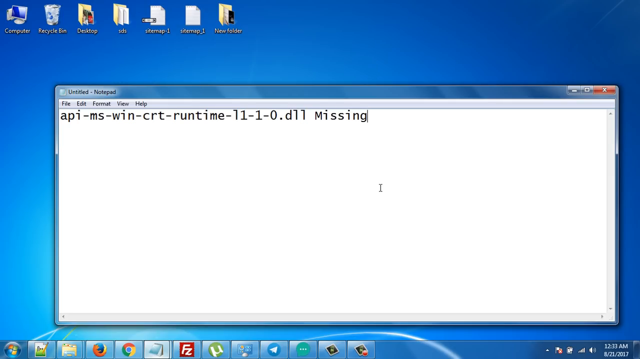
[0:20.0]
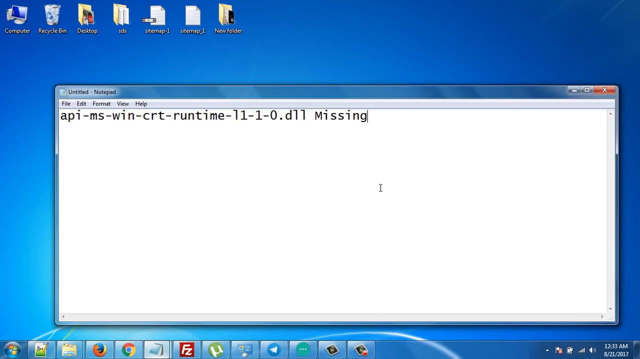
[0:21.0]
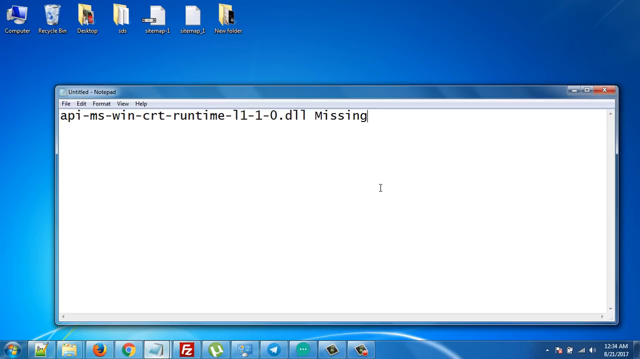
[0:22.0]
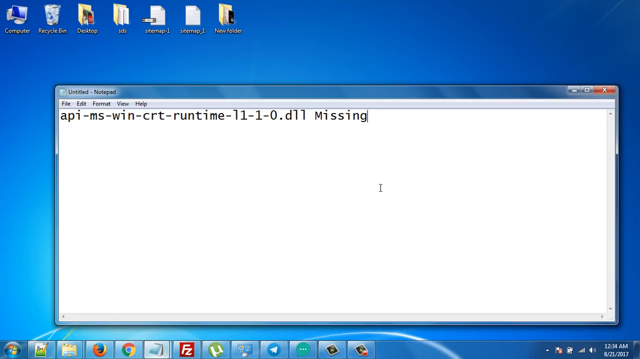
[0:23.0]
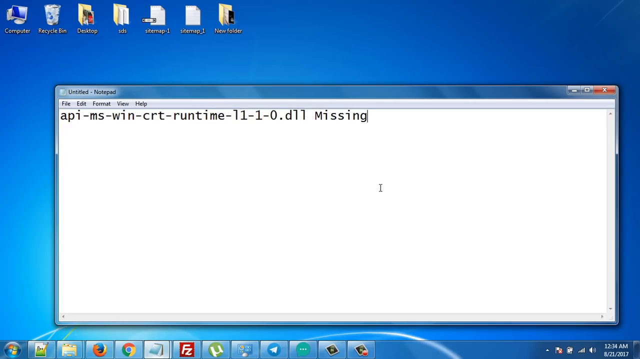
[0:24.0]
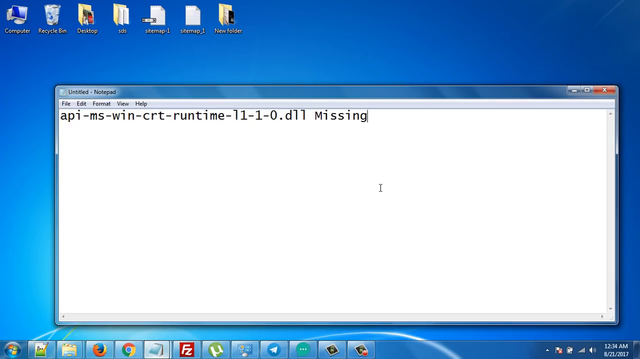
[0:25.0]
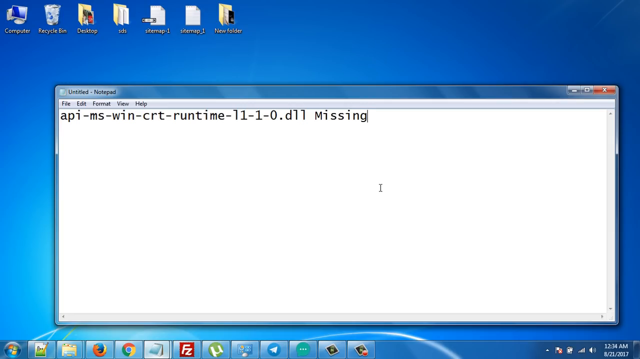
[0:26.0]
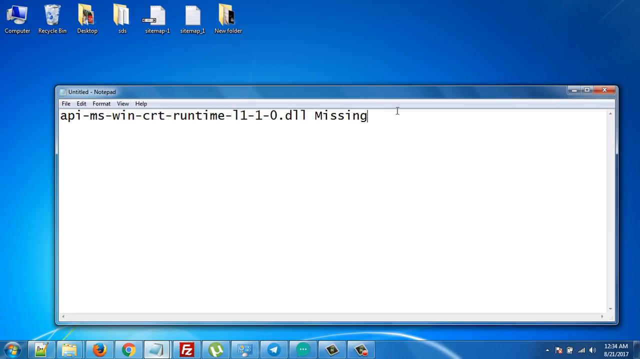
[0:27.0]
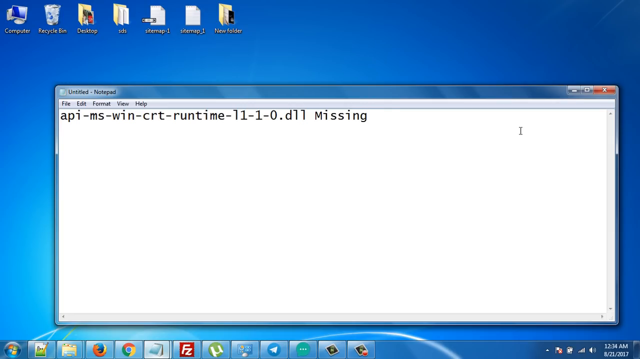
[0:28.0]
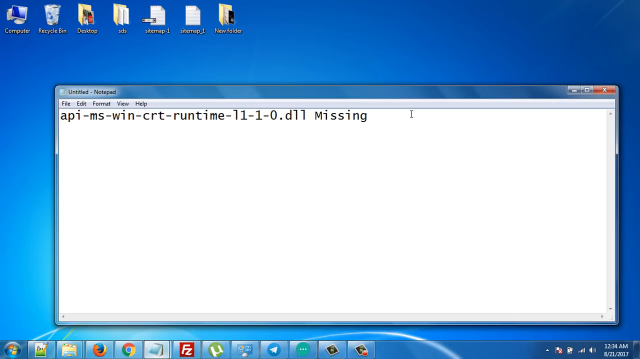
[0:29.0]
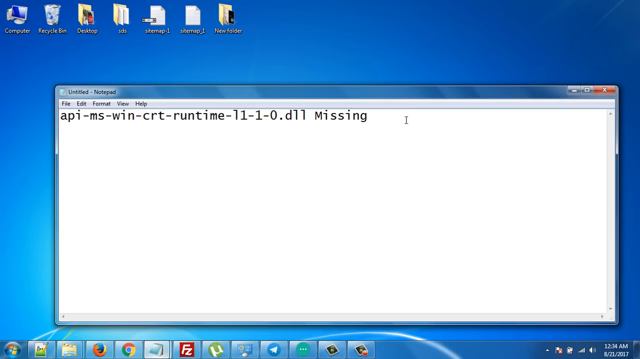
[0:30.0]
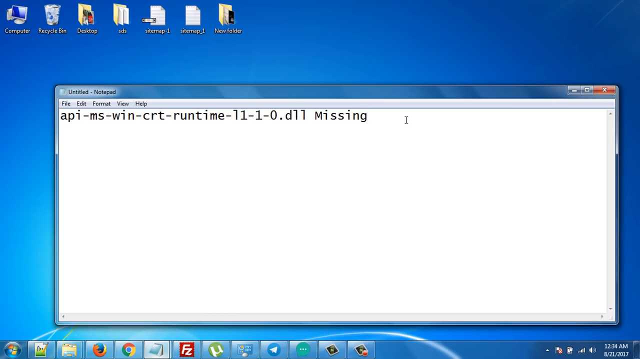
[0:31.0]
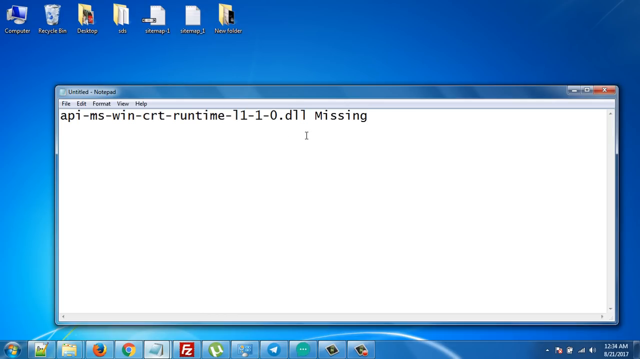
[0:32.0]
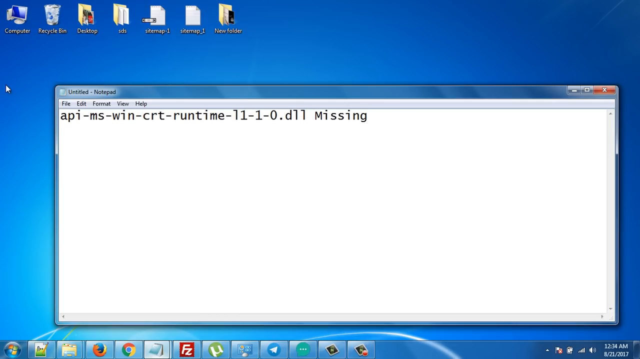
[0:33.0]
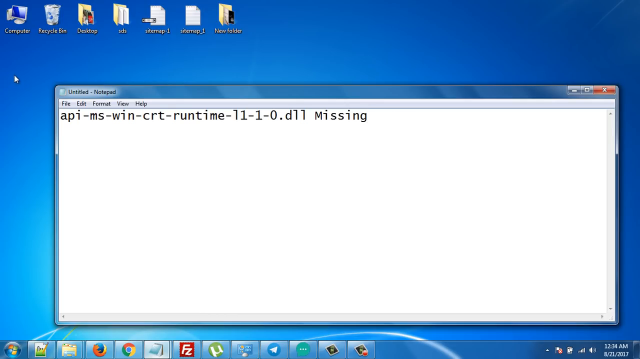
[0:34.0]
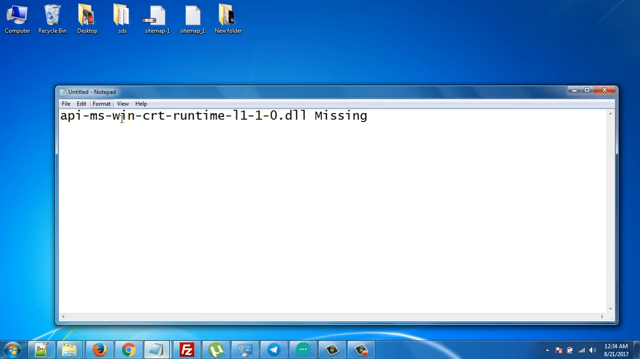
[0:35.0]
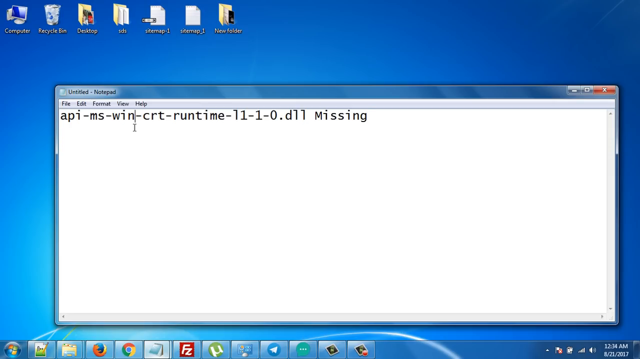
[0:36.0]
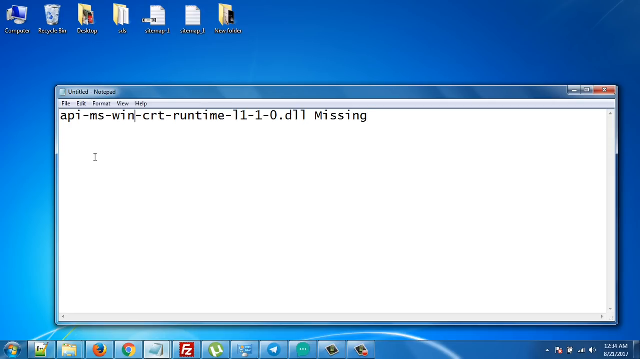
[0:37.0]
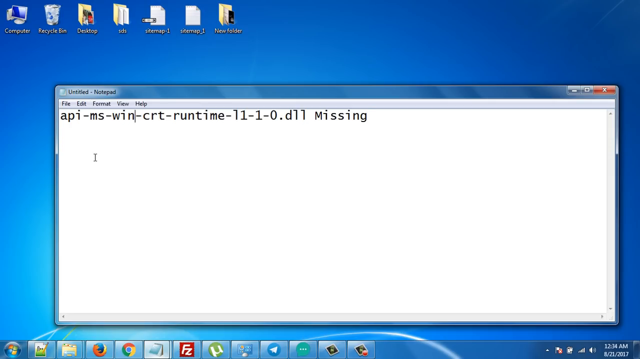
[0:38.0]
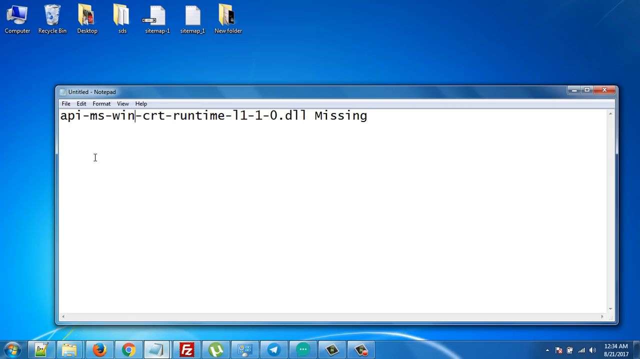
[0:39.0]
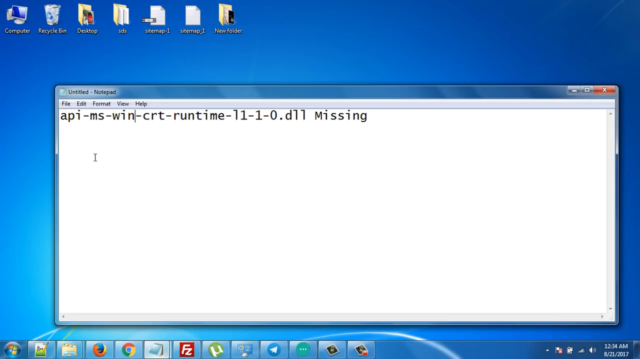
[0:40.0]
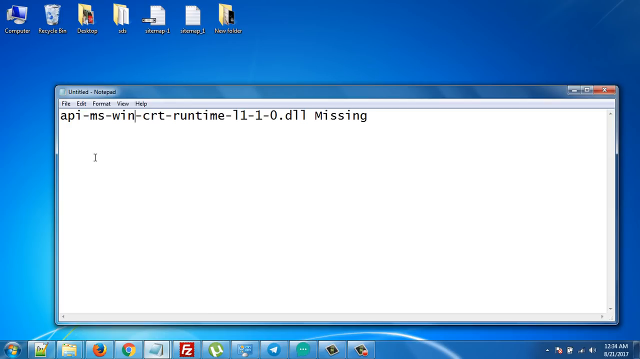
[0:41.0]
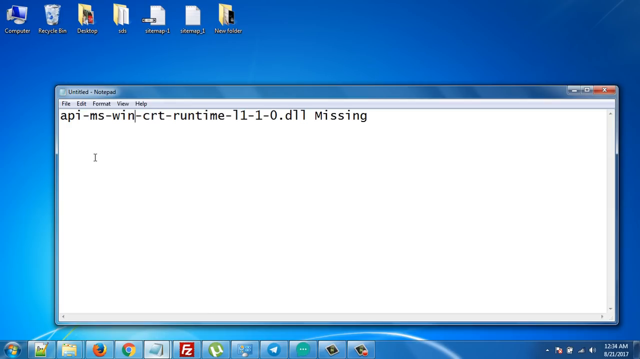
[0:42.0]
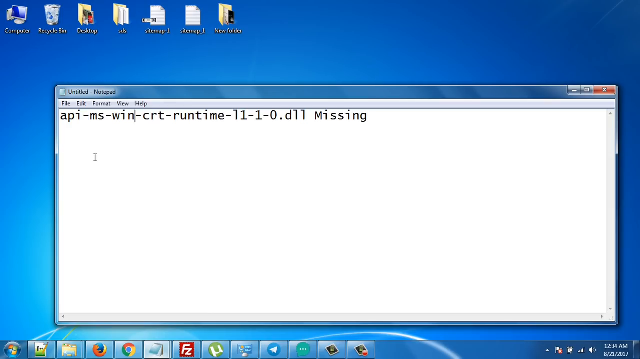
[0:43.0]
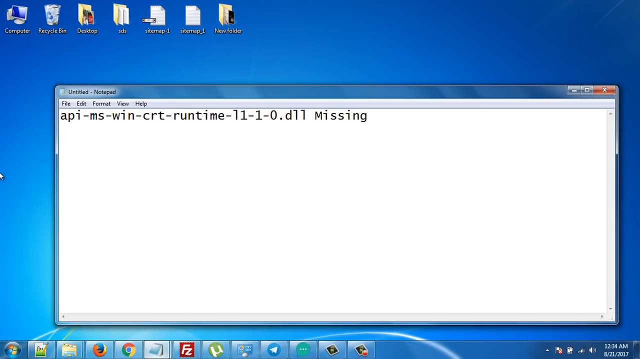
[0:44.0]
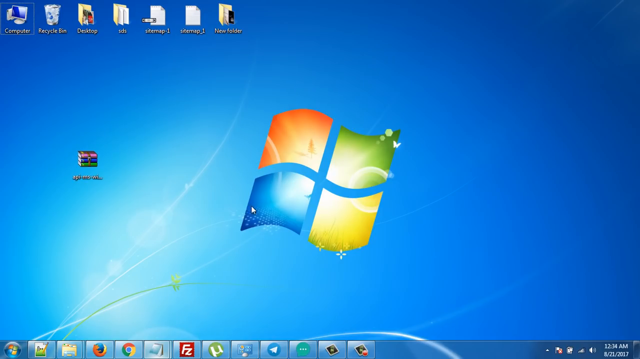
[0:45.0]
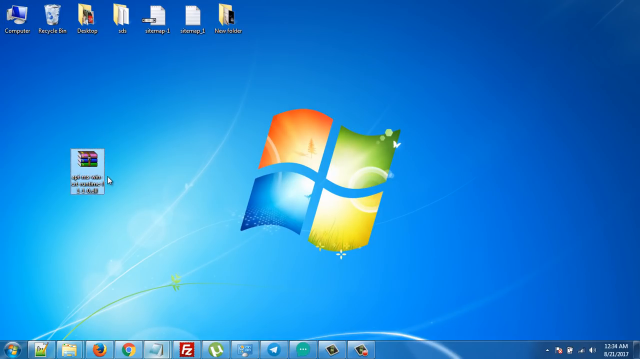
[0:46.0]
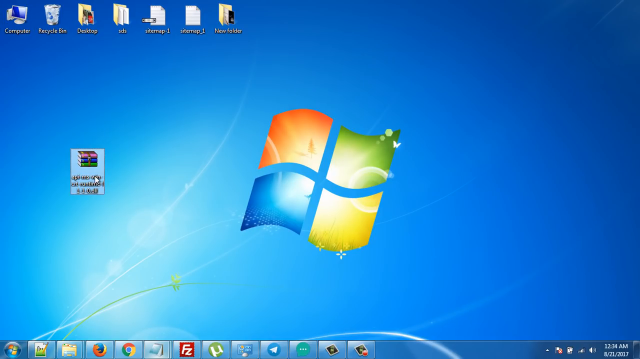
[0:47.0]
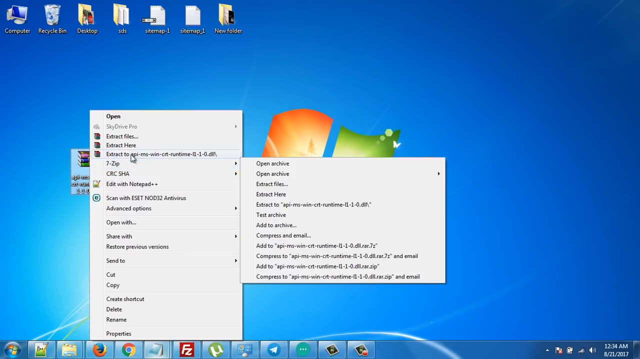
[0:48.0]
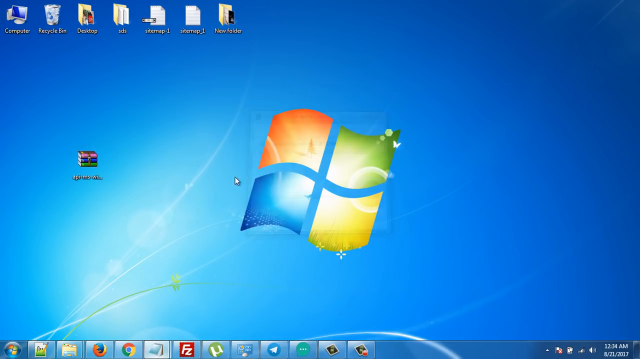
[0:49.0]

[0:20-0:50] The desktop with the blue backdrop is on screen, and in the middle is a white backdrop like a computer screen showing "api-ms-win-crt-runtime-11-1-0.d11 missing." The person moves the cursor to the end of "missing" but does not really do anything with it. The view goes back to the main Windows backdrop, where a file is open, apparently the file being shown, and the cursor rests at the end of "missing" without anything else happening.